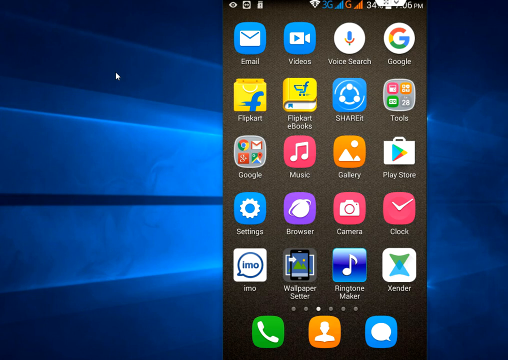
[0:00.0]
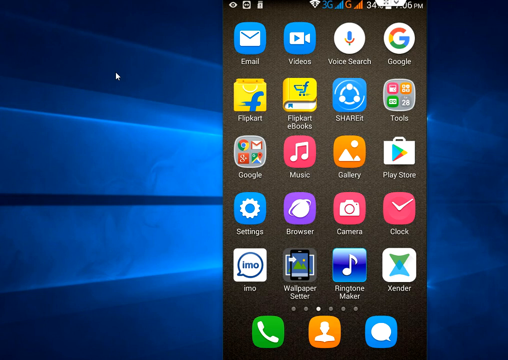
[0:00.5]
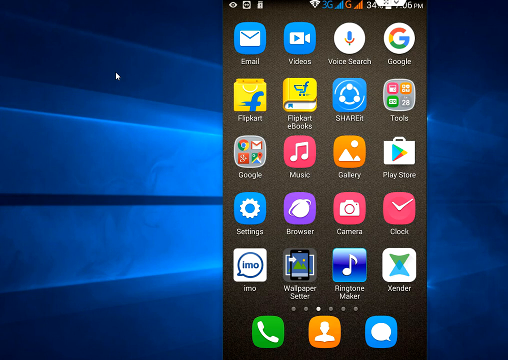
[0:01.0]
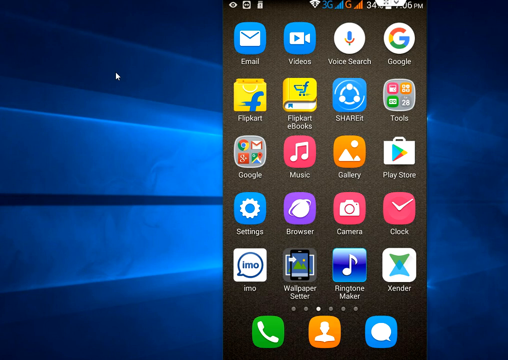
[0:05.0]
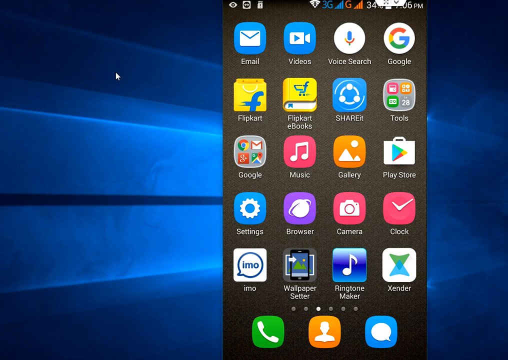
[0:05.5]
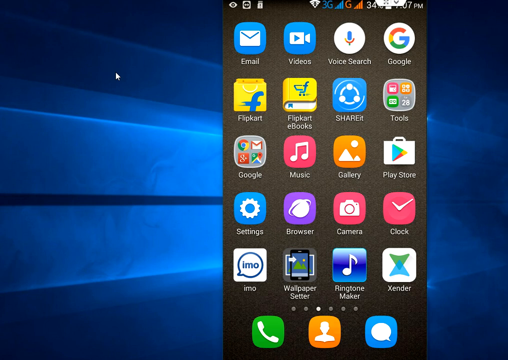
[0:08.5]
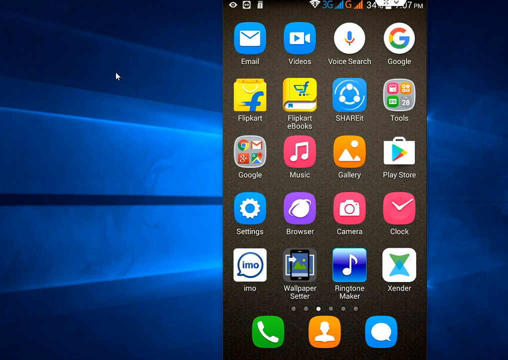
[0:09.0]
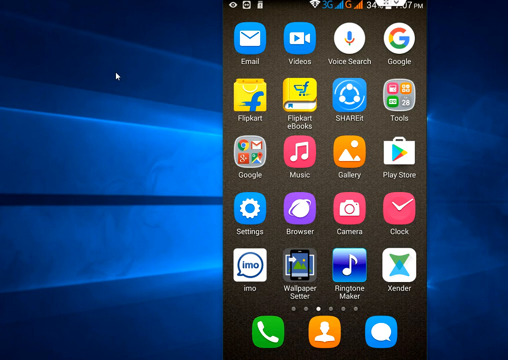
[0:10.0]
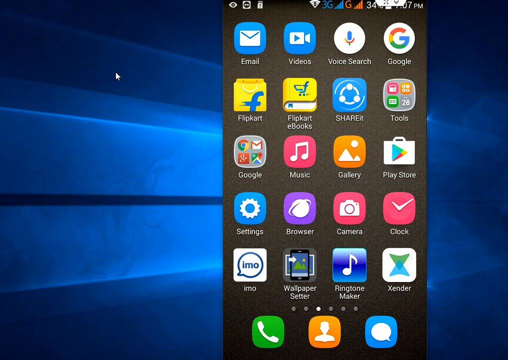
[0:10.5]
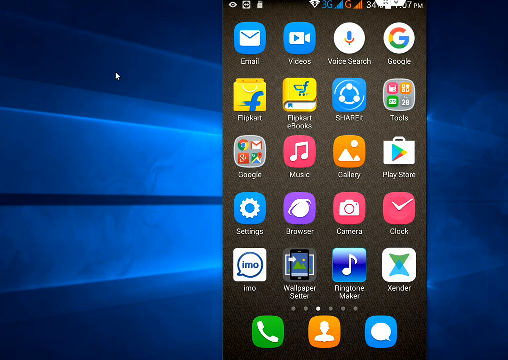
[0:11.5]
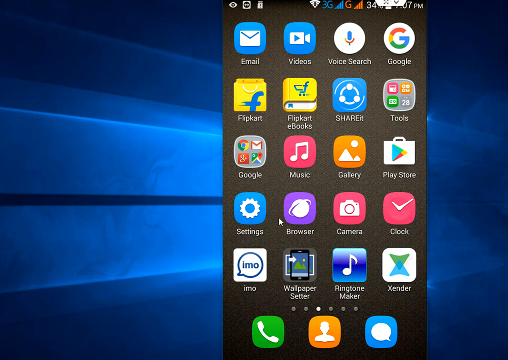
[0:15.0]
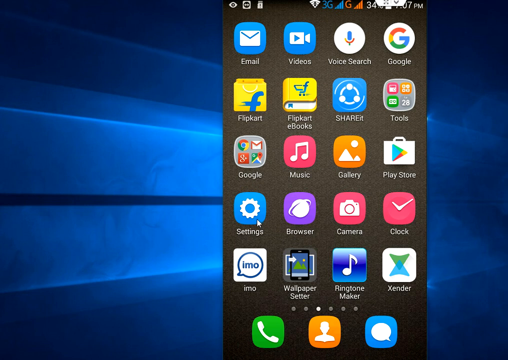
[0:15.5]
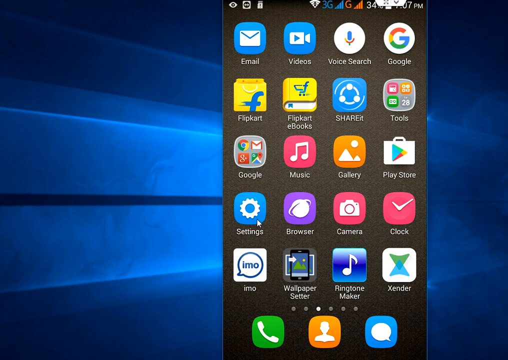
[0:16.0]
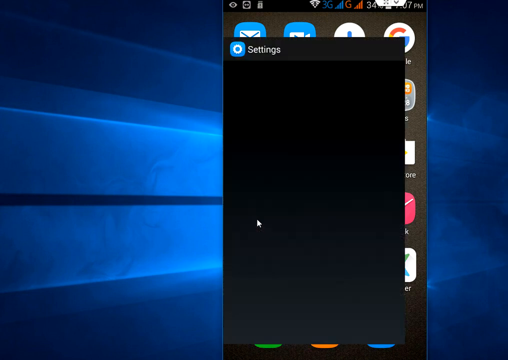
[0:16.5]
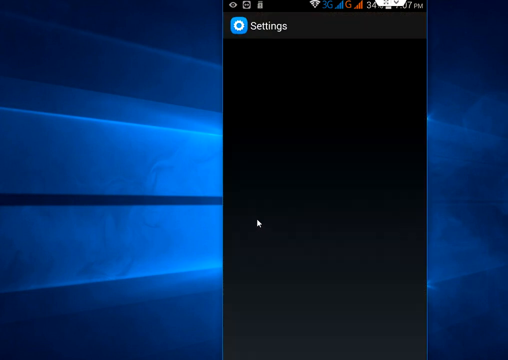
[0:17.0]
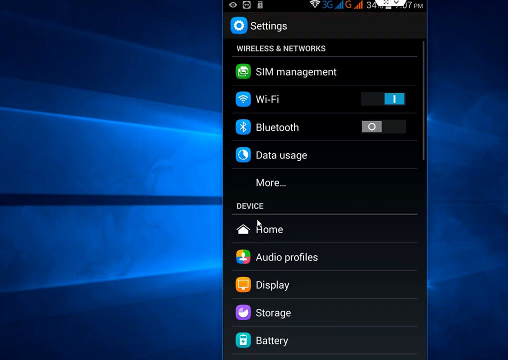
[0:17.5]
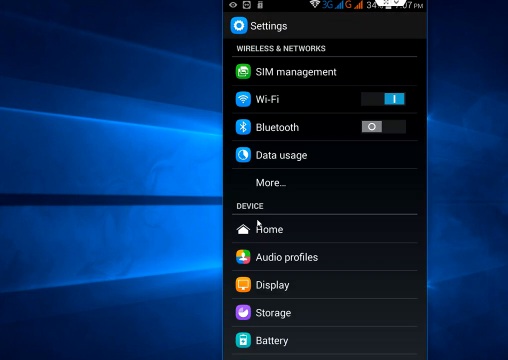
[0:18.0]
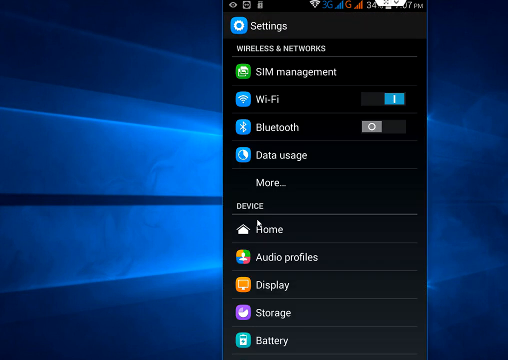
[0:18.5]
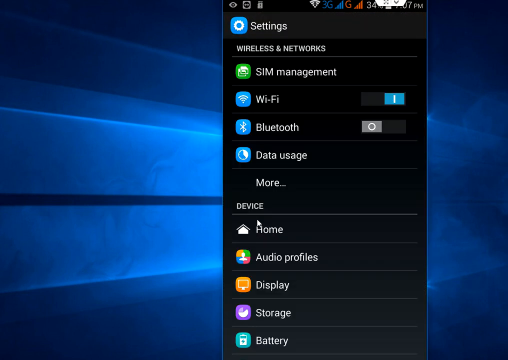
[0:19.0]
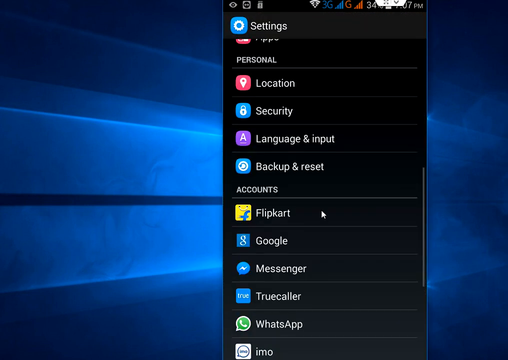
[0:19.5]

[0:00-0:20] Against a blue background with a sort of lighter blue streak across the middle, a mobile phone interface appears at the right-hand end of the streak. It appears to be an older version of Android and has 23 icons. The first 20 form a 4x5 grid: email, videos, voice search, Google, Flipkart, Flipkart eBooks, Shareit, Tools, a Google folder containing Chrome, Gmail, Google Plus and Maps, Music, Gallery, Play Store, Settings, Browser, Camera, Clock, IMO, Wallpaper Setter, Ringtone Maker and Xender. At the bottom are three icons: phone, contacts and the messaging app. Along the top of the interface are multiple icons, among them Wi-Fi and 3G, and the battery is at 34%. The time shows PM, but its first number is obscured. The screen stays like this for about 14 seconds. Then the Settings icon is clicked, and the Settings menu expands to fill the whole mobile interface. Under Wireless Networks are SIM Management, Wi-Fi, Bluetooth, Data Usage and More. Below that, the Device section lists Home, Audio Profiles, Display, Storage and Battery, each with its icon to the left. Next is the Personal heading with Location, Security, Language and Input, and Backup and Reset, followed by the Accounts heading with Flipkart, Google, Messenger, Truecaller and WhatsApp.